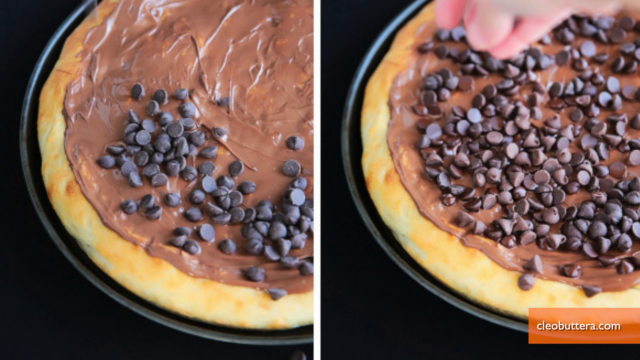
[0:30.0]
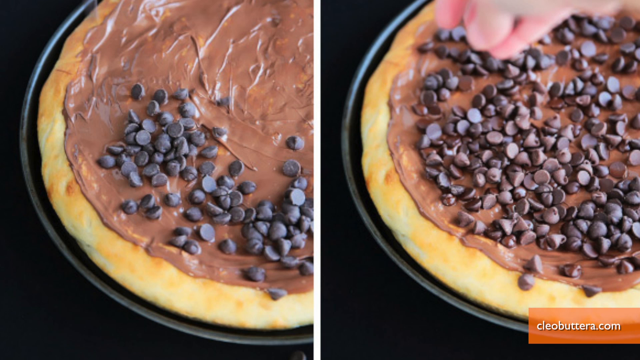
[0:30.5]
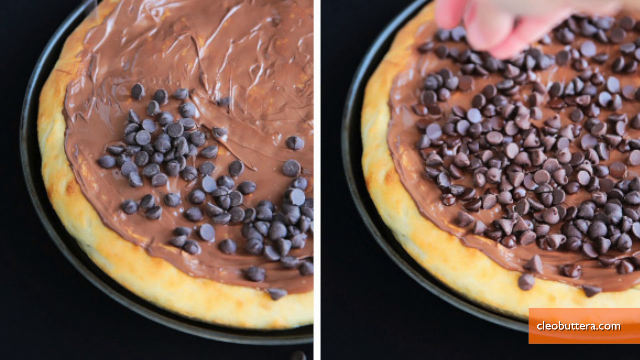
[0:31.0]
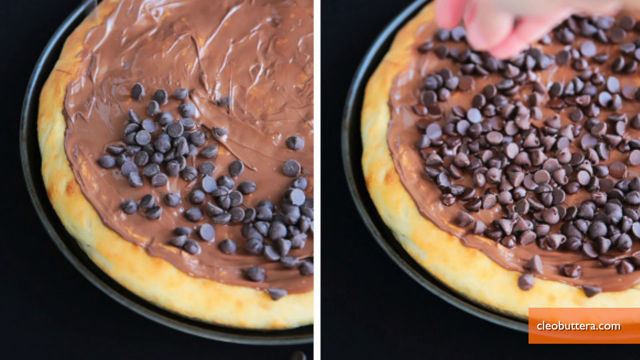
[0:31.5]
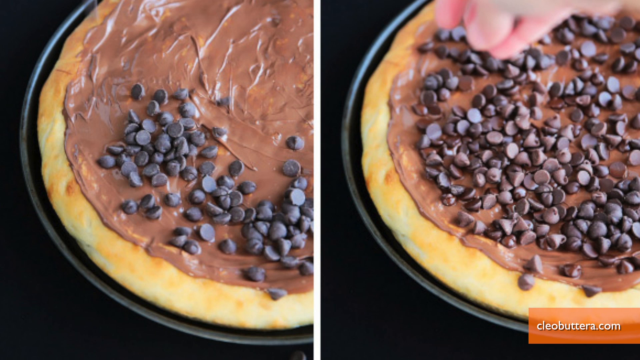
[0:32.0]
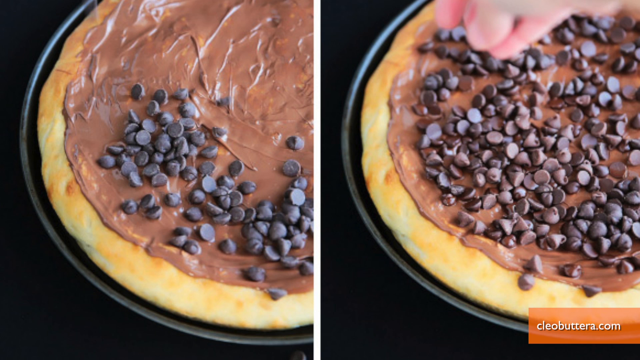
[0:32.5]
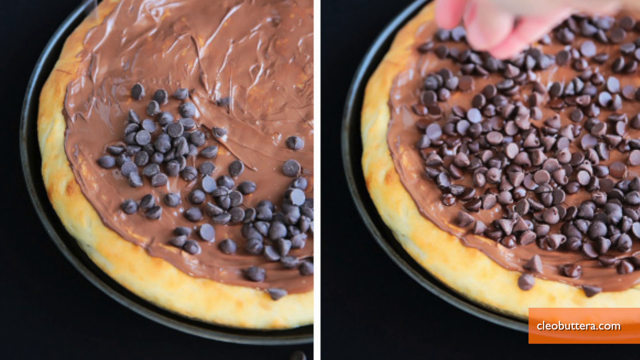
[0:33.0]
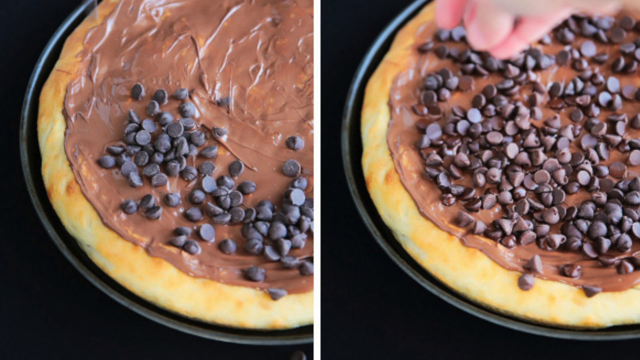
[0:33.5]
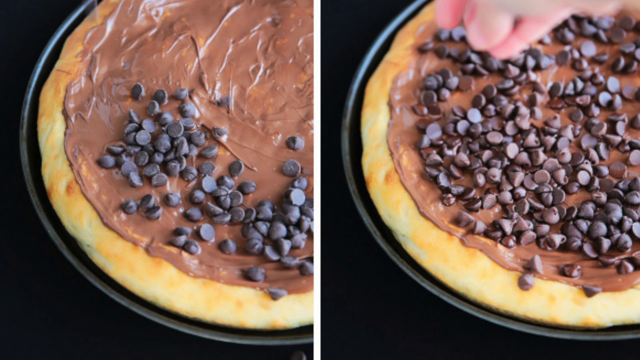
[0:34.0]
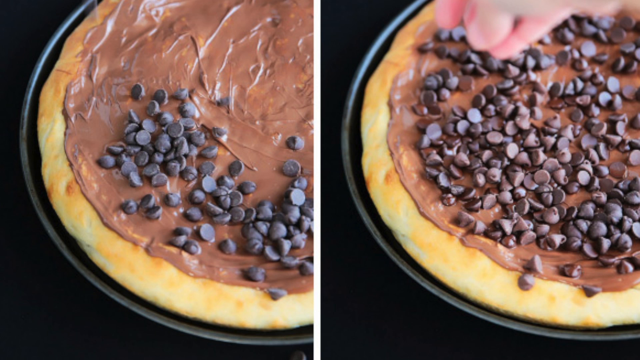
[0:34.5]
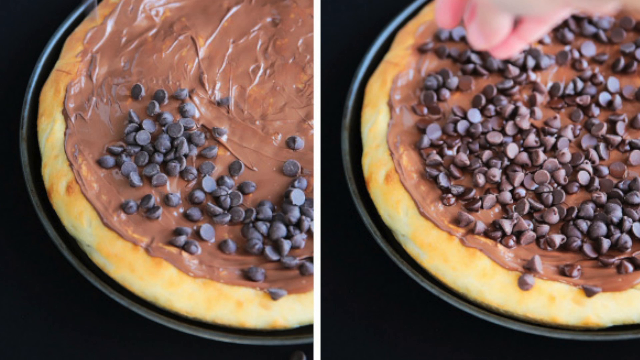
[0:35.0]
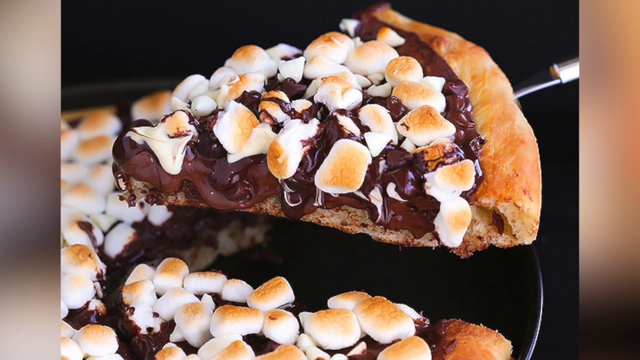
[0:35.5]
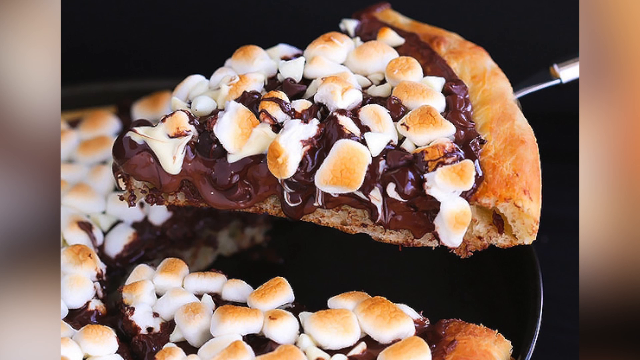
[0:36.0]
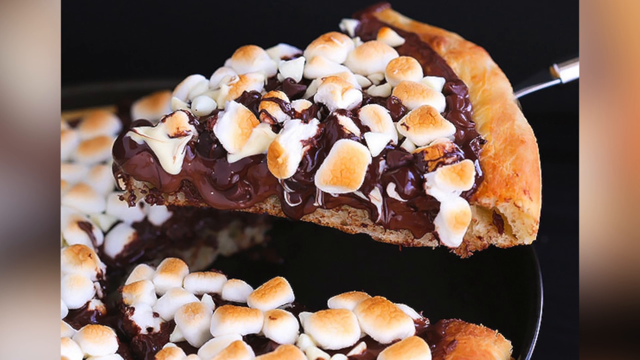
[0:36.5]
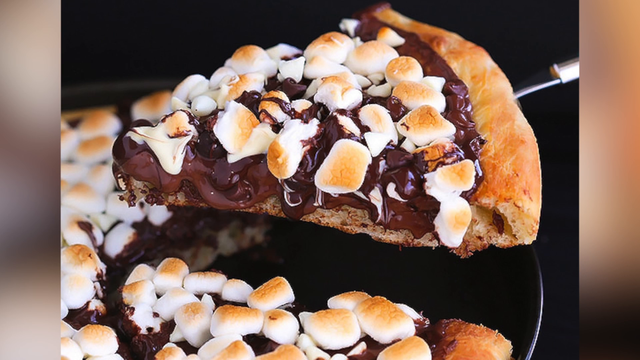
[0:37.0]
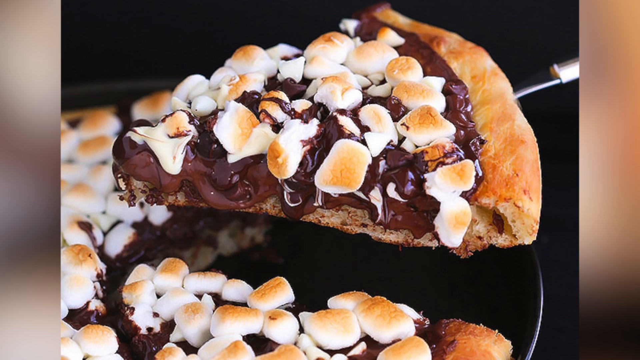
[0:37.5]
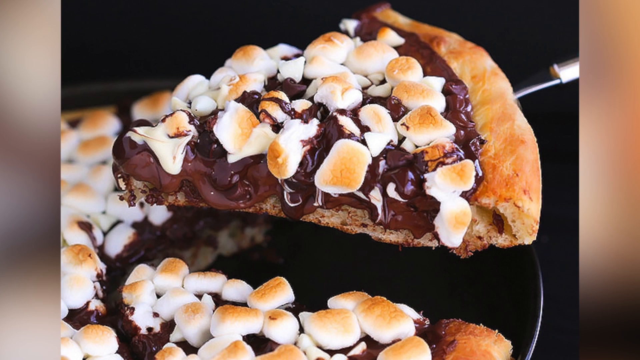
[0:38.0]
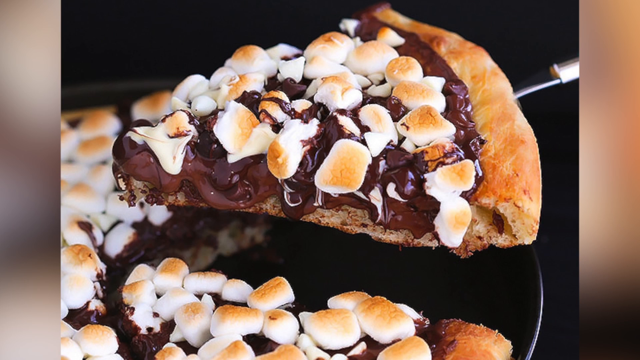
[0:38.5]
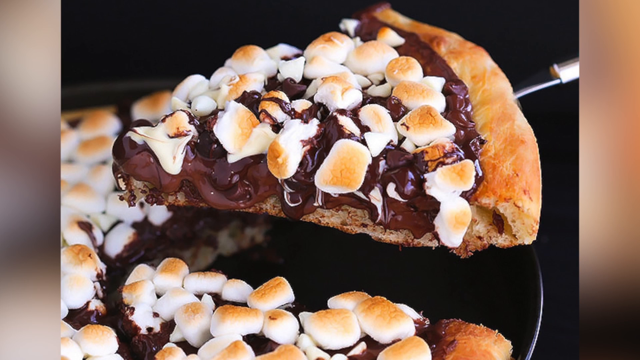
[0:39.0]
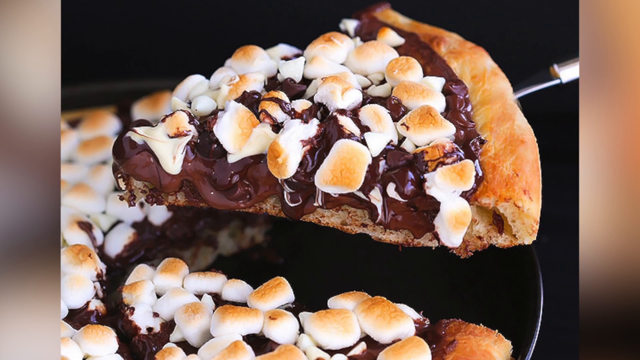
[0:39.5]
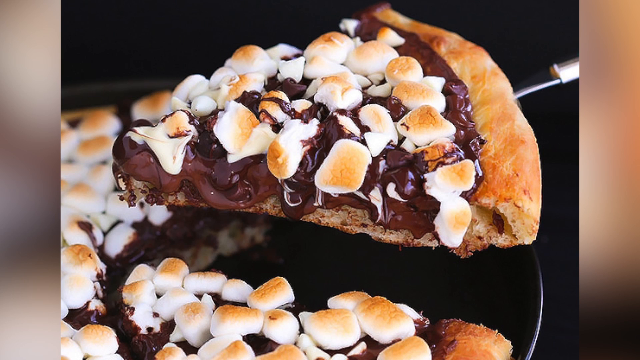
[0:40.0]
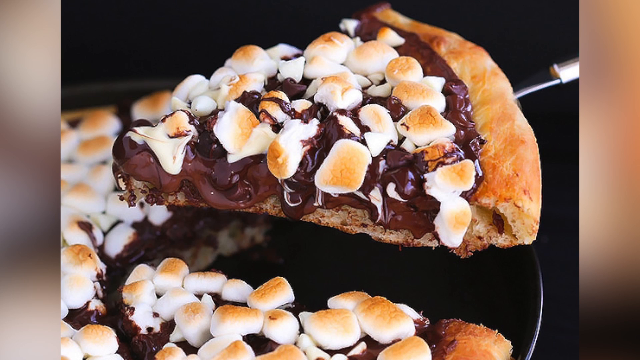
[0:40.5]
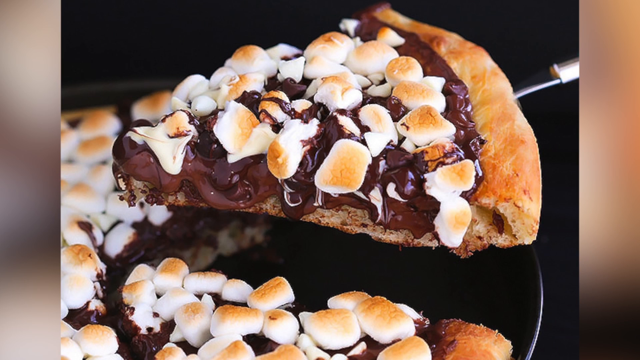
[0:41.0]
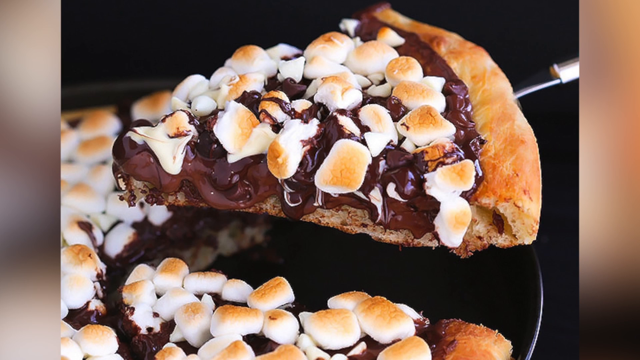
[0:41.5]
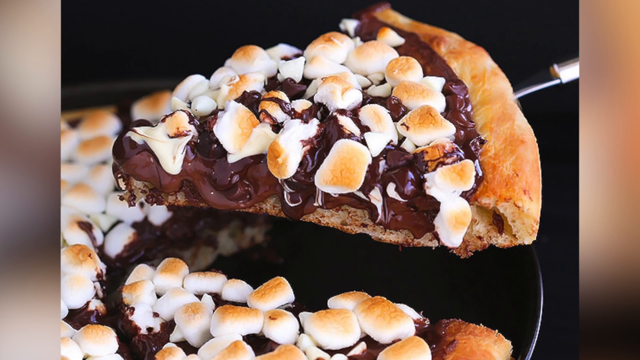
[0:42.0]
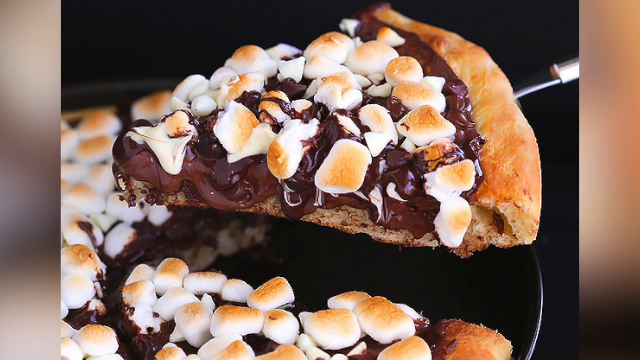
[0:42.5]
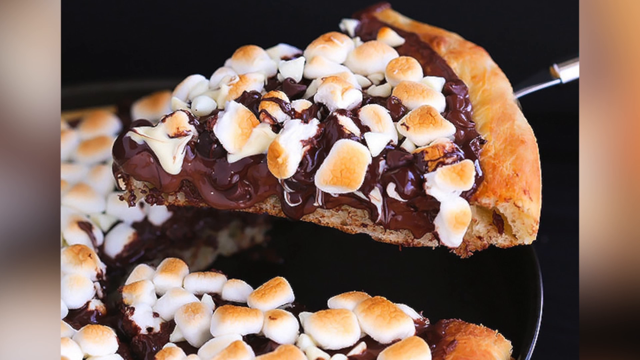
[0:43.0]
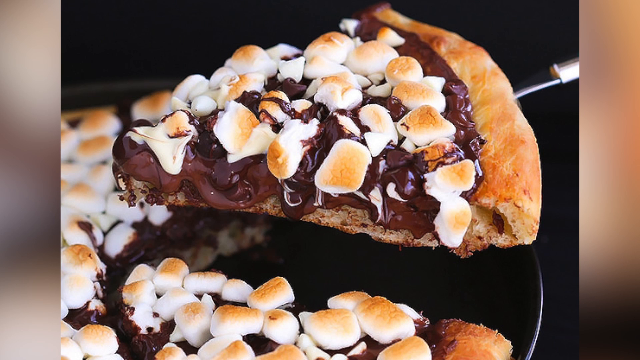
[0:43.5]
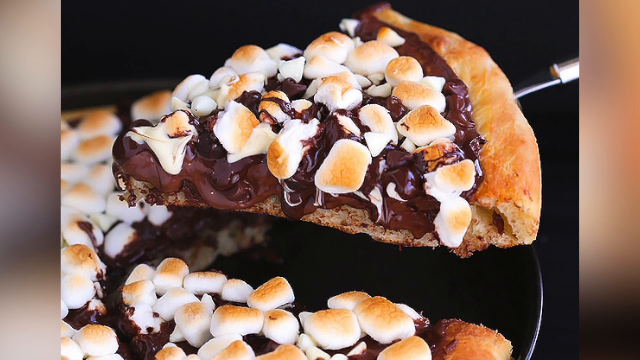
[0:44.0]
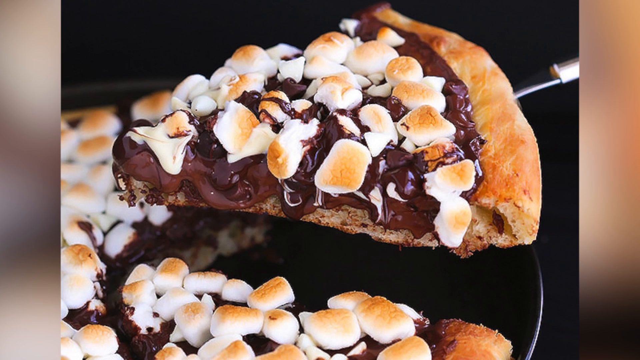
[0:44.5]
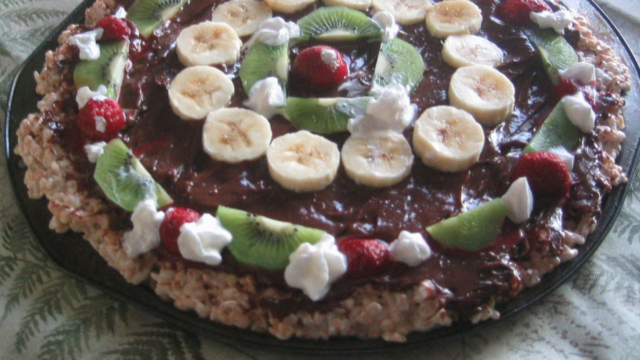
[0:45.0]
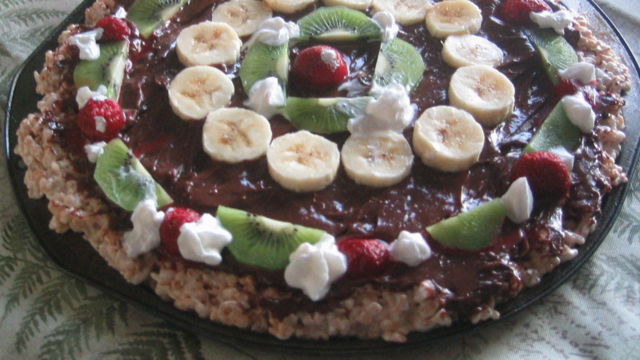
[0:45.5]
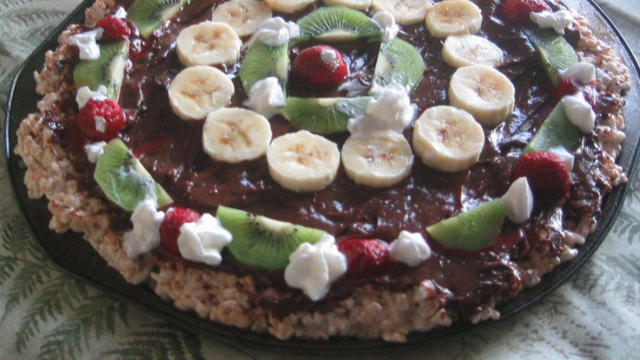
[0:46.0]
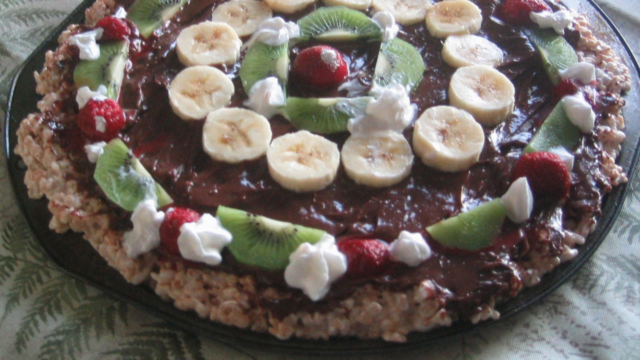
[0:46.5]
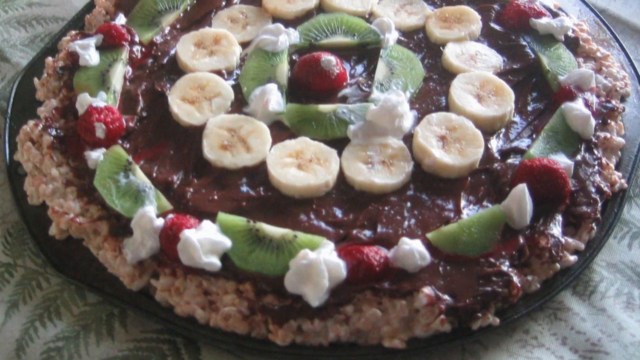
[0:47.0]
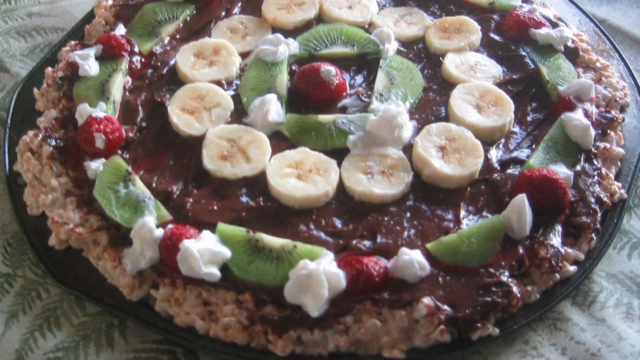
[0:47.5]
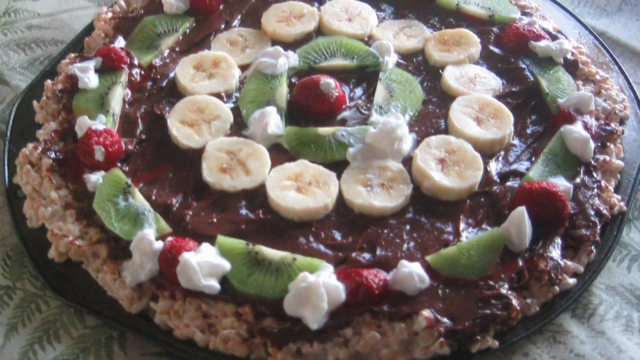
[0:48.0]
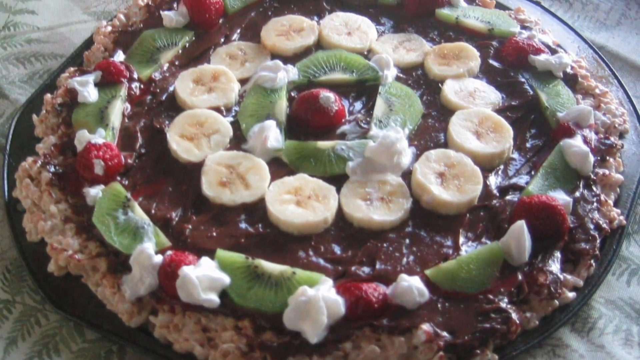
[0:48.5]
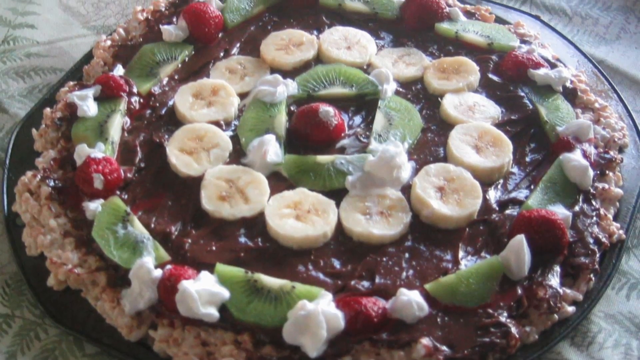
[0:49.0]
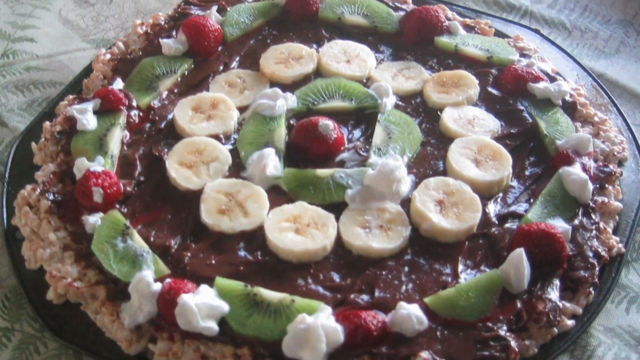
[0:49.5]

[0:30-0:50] A pie crust with chocolate chips and a swirl of chocolate is shown. Hands are seen picking up or putting down the chocolate. It is almost like a dessert pizza of some kind. A slice is picked up out of the top of it; the topping looks like marshmallows, and browning is visible on the marshmallows. It looks very creamy. Bananas, strawberries and kiwi are visible. It is definitely a pizza-type dessert that is sliced and eaten, sweet and creative, with chocolate chips.